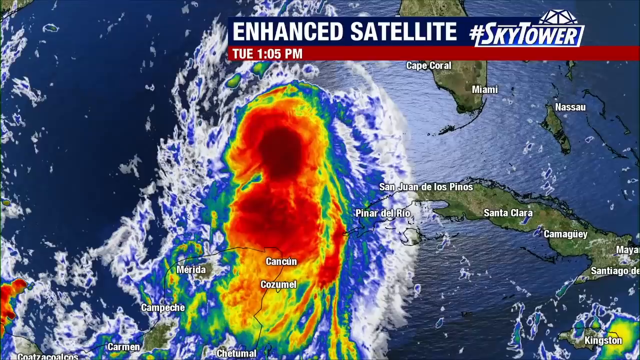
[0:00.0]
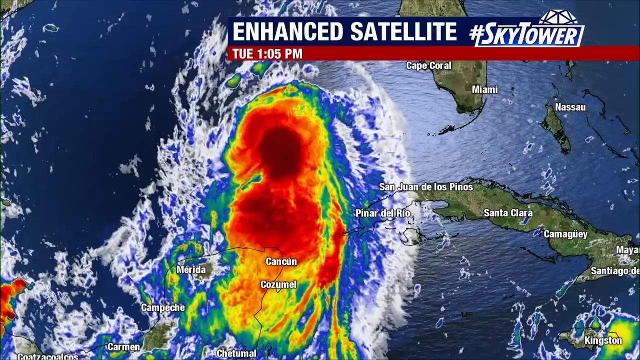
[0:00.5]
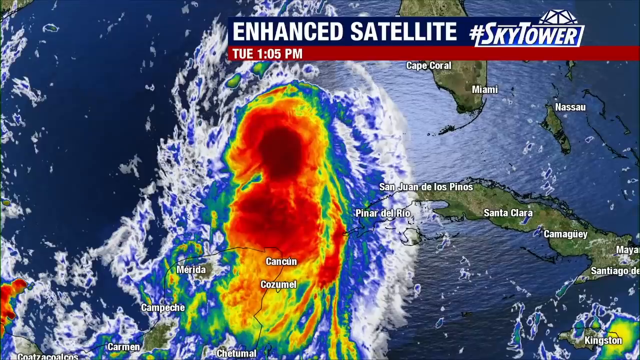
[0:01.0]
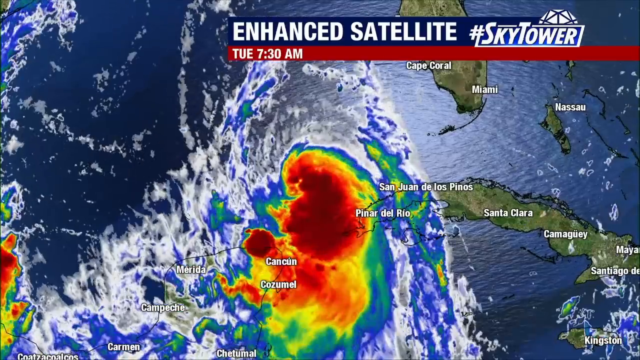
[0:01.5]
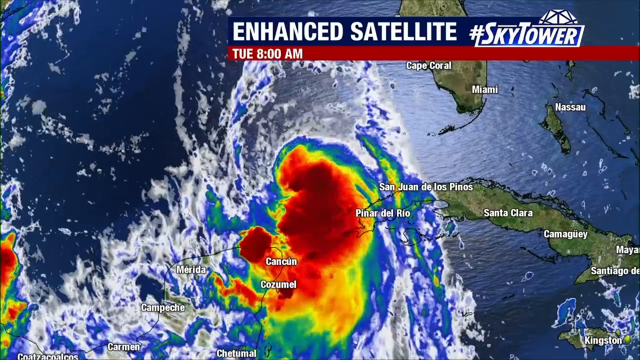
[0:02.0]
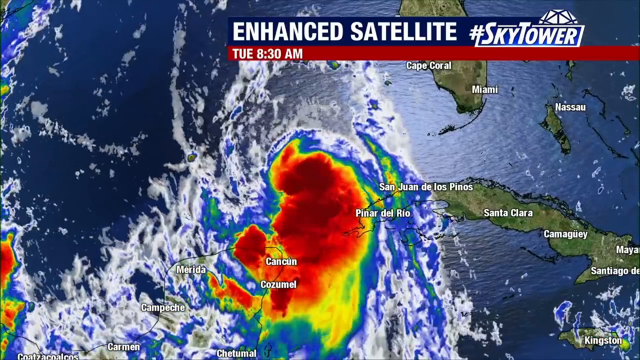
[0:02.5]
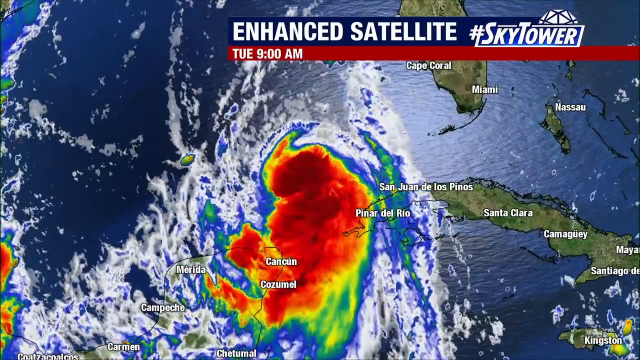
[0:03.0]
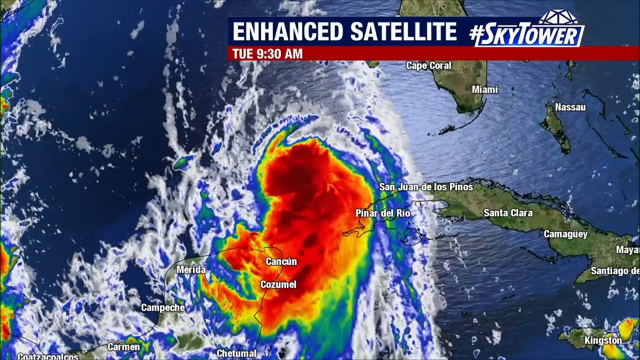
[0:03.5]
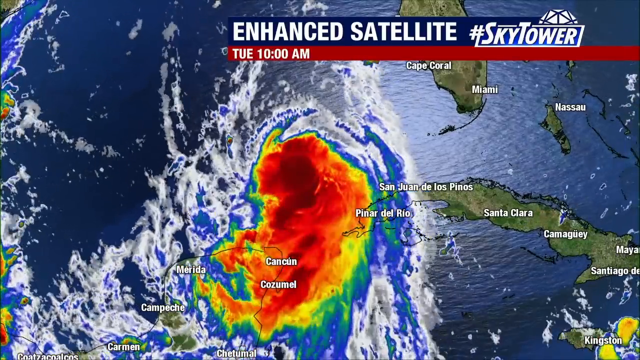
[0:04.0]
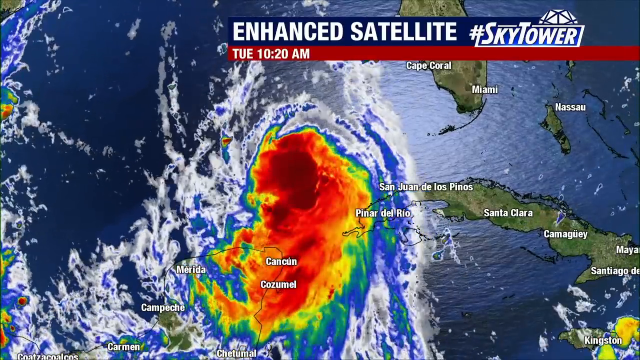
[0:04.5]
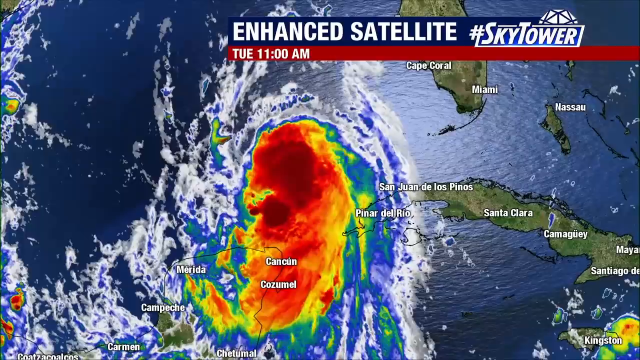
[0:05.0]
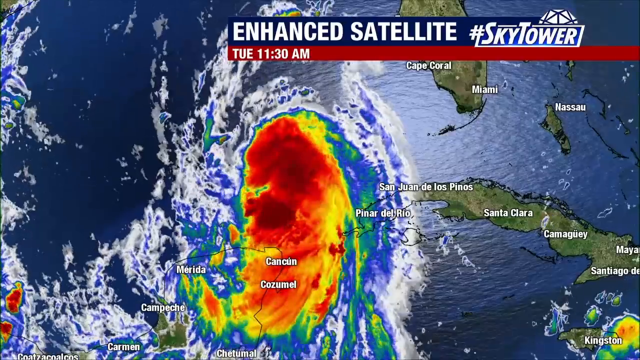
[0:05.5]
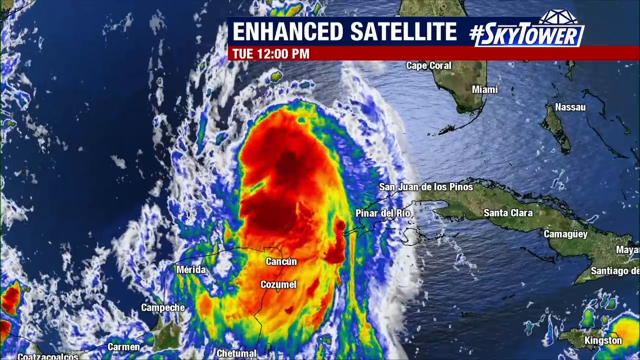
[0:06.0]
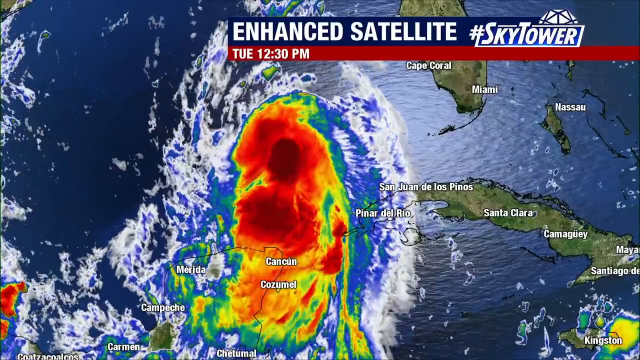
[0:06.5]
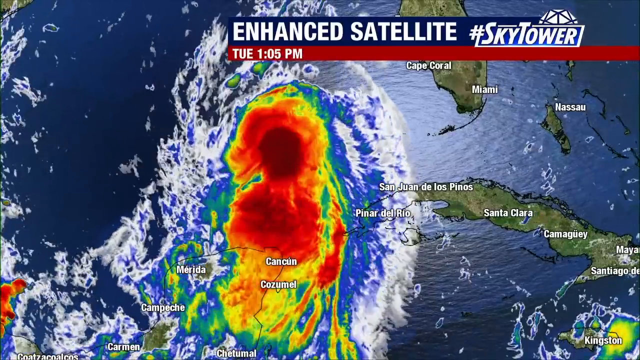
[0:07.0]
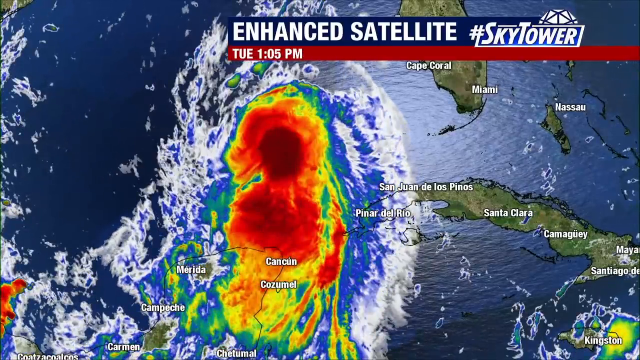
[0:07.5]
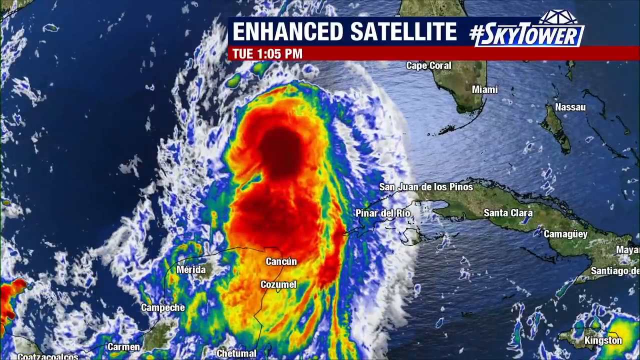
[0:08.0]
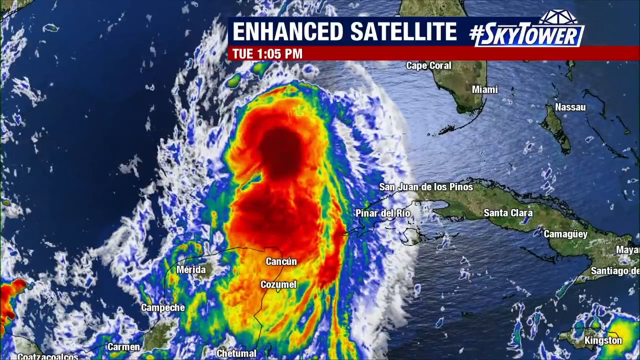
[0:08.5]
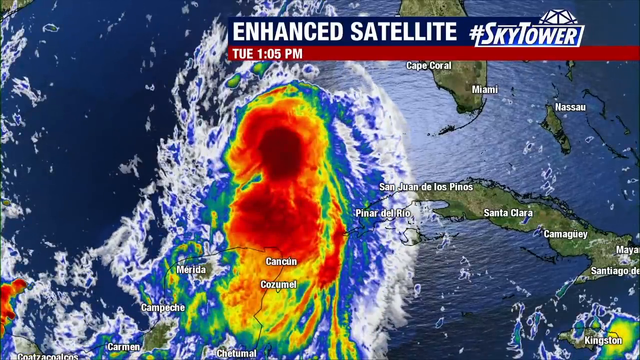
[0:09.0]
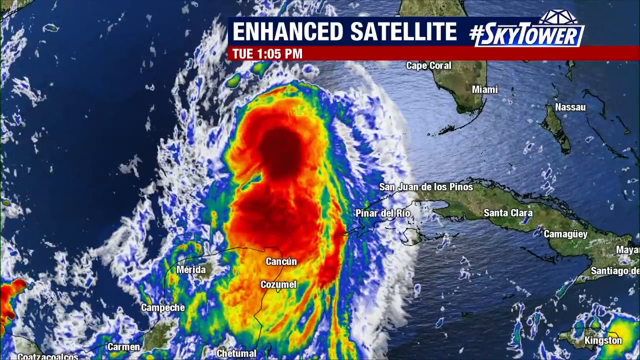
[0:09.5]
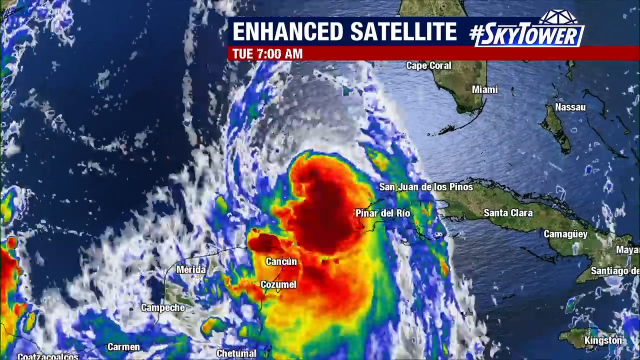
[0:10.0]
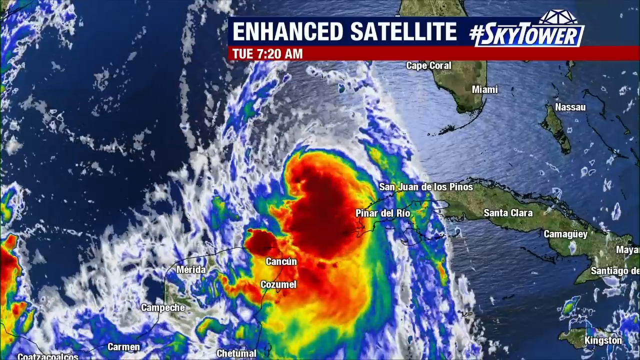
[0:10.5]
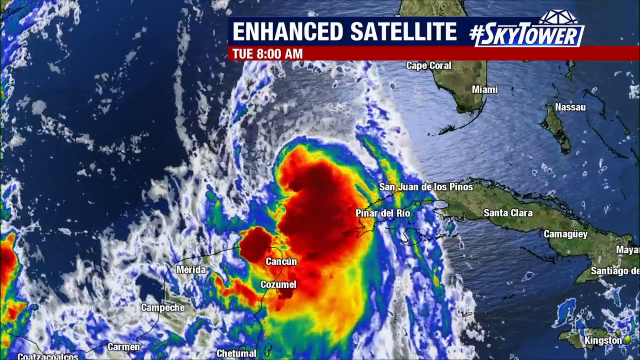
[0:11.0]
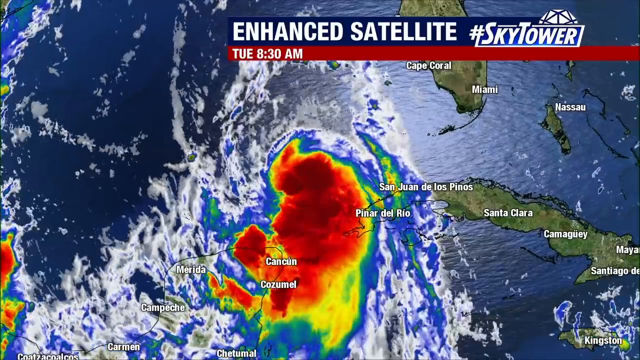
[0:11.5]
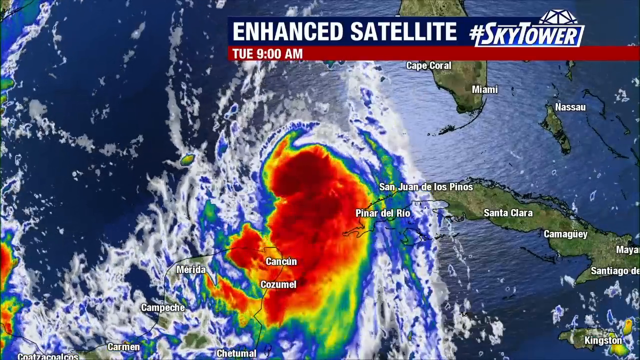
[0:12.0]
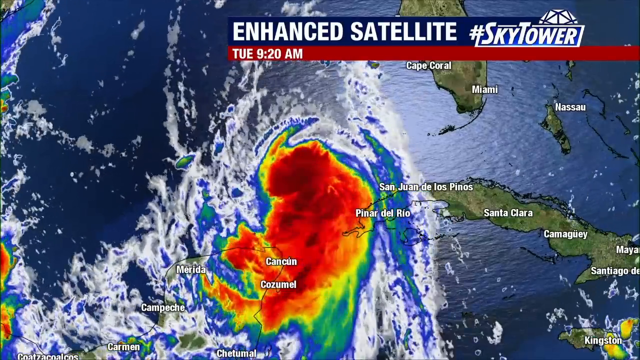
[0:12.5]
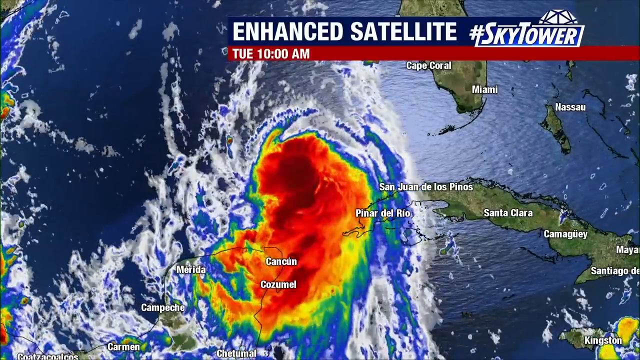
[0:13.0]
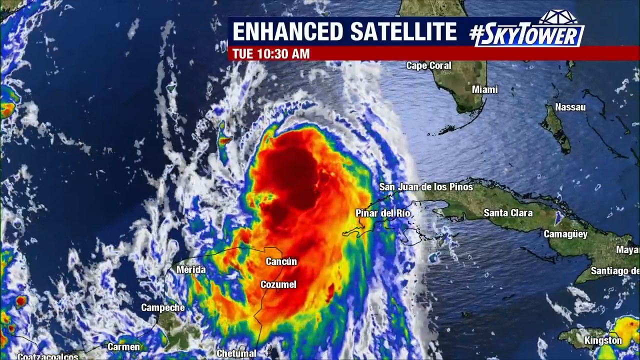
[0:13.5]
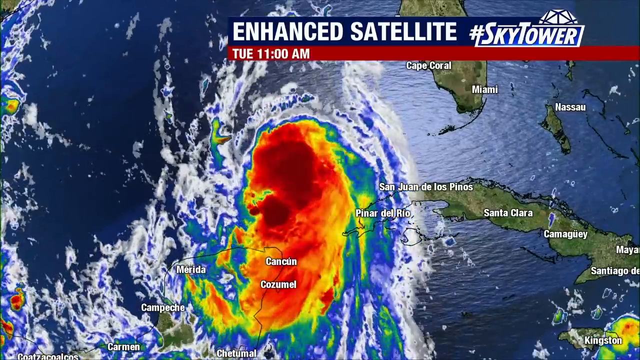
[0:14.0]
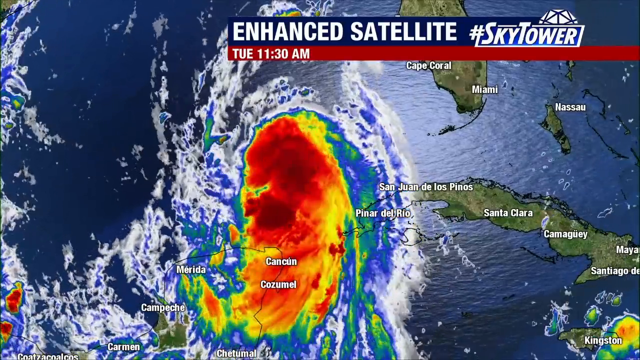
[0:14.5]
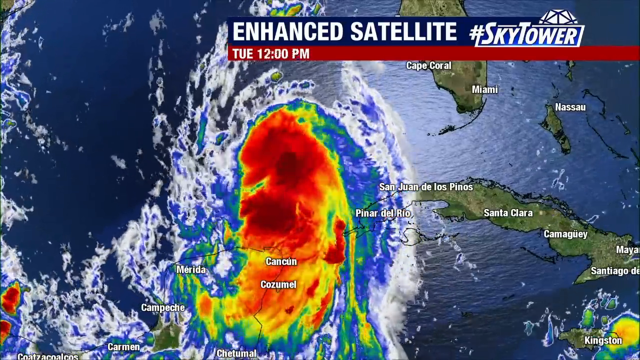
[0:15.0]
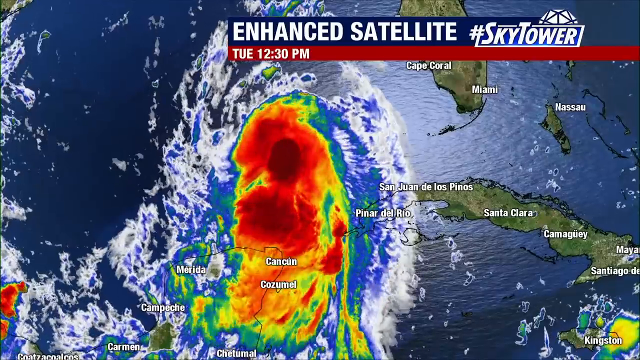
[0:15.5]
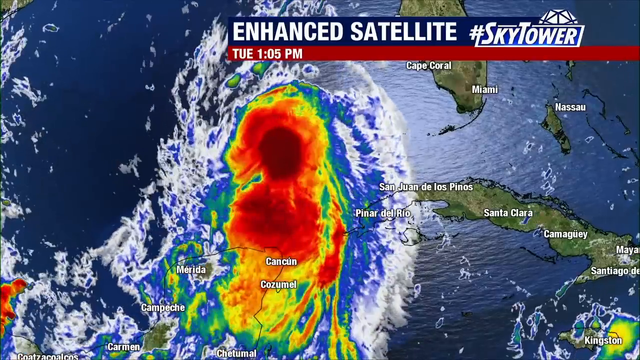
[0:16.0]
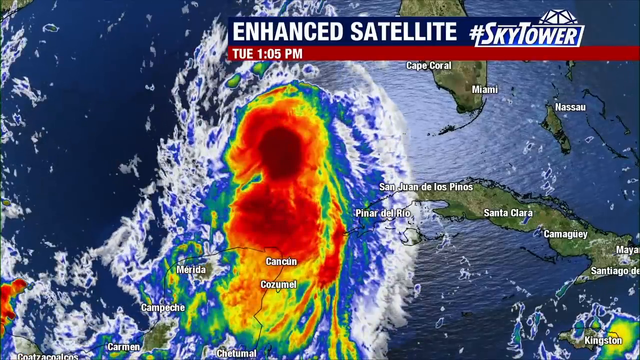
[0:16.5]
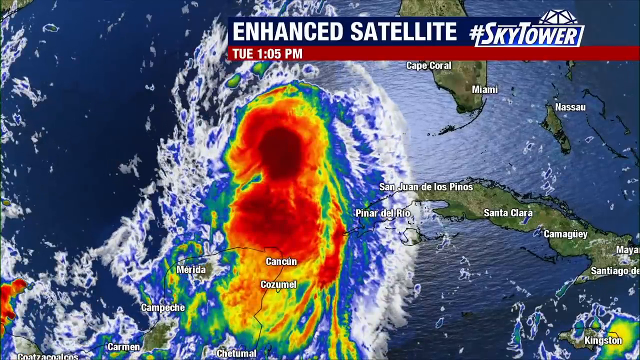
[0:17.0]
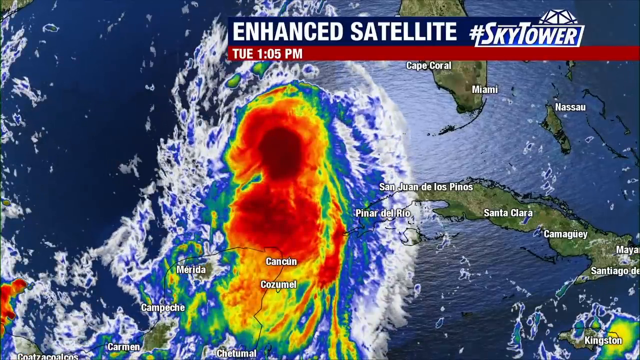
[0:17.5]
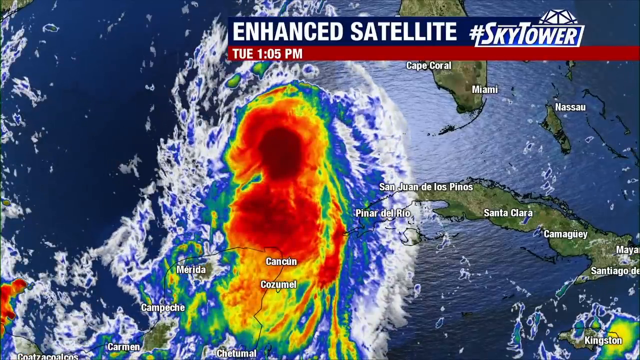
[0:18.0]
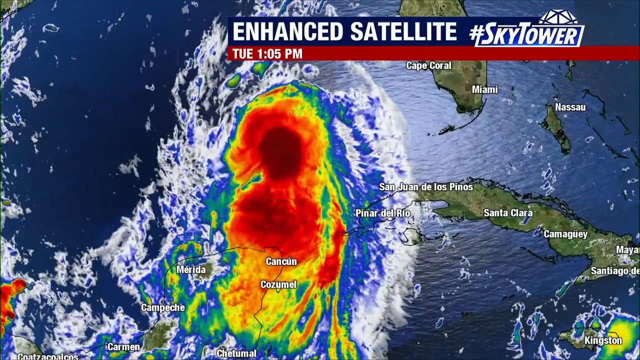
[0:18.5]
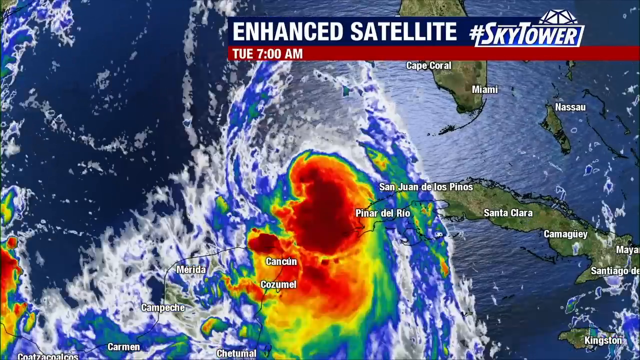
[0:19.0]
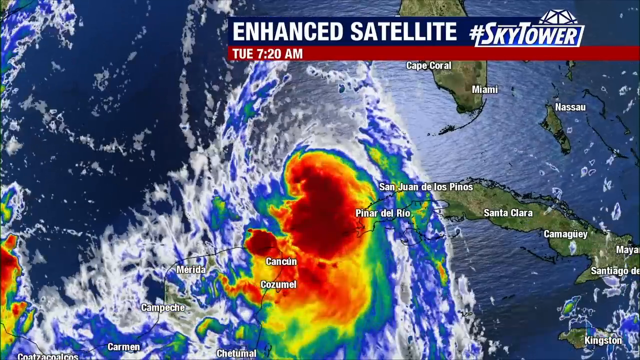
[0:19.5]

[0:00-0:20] A storm is coming in, apparently west of Florida in what looks like the Gulf of Mexico. It shows many different colors, with lots of red. On-screen text reads "Enhanced satellite Sky Tower" with a time of Tuesday at 1:05 PM. As the animation plays, the storm circles and moves, and it is on the western tip of Puerto Rico. It covers parts of Mexico, including Cancun and Cozumel, and it is clearly spinning; as it spins, the red intensifies as it moves along. At this point the storm is affecting the coast of Mexico by Cancun. Other places on the map include the Caribbean, the Bahamas, and the southern half of Florida.